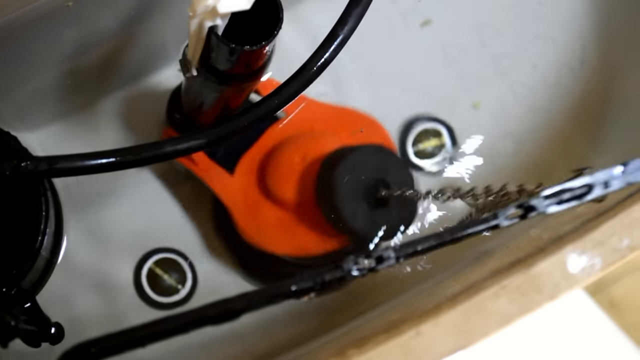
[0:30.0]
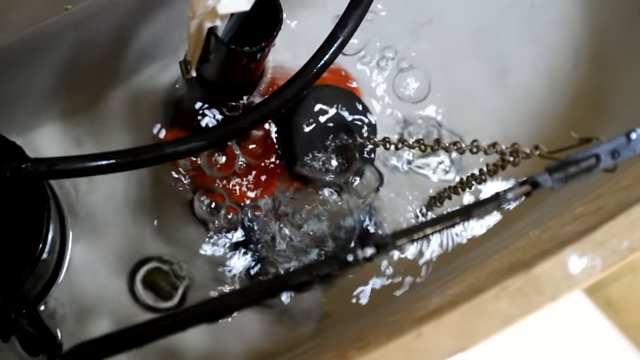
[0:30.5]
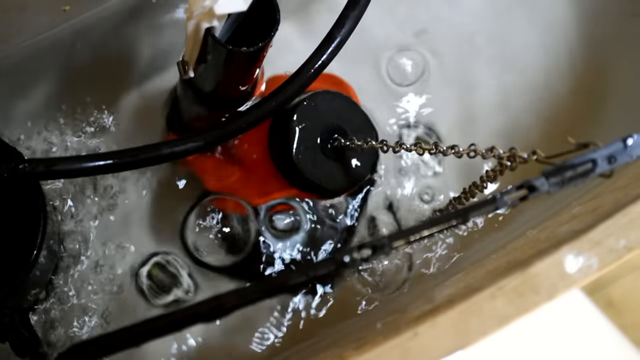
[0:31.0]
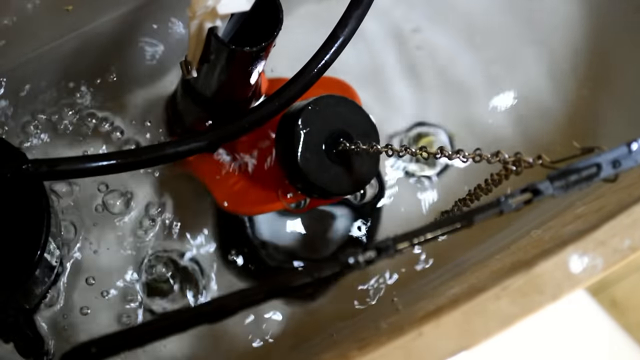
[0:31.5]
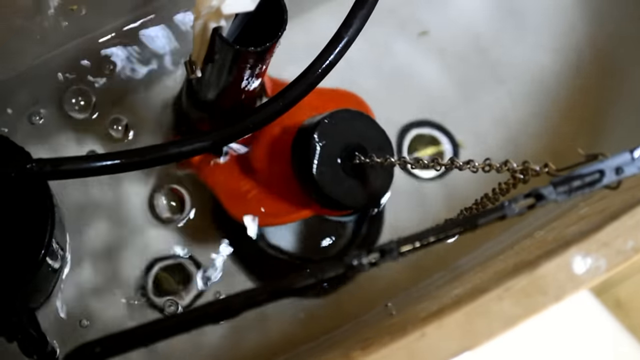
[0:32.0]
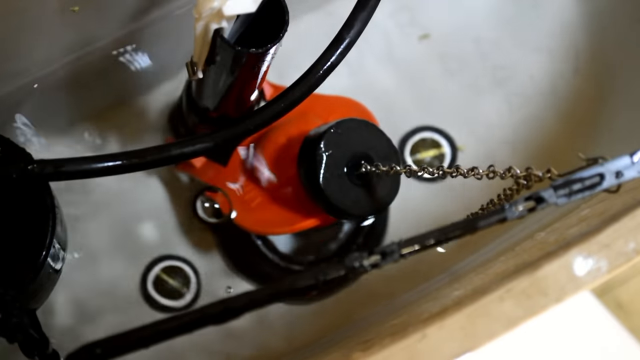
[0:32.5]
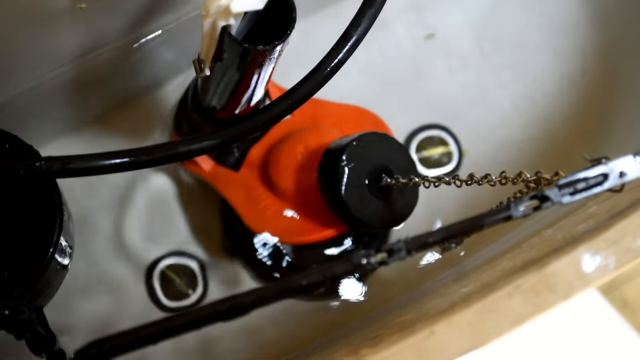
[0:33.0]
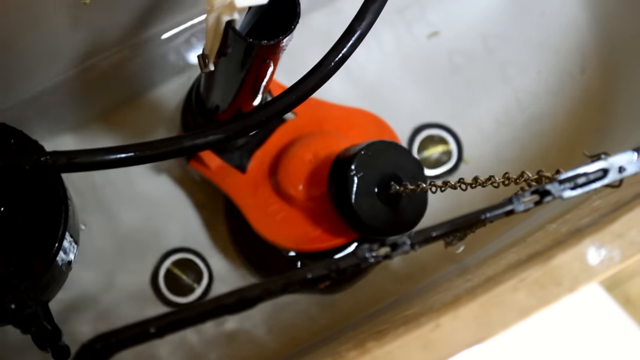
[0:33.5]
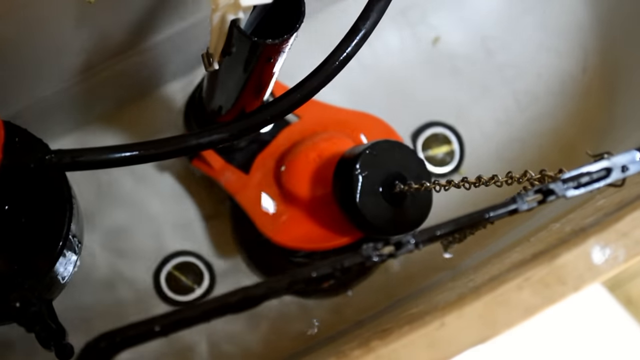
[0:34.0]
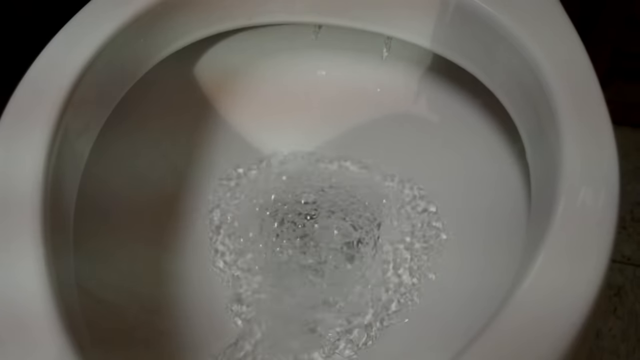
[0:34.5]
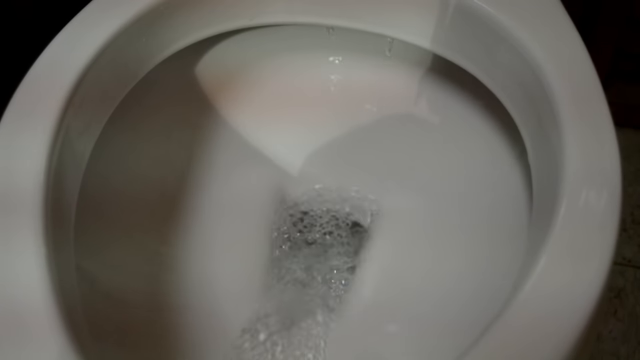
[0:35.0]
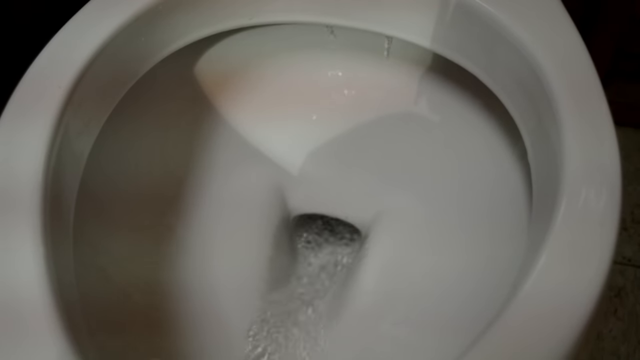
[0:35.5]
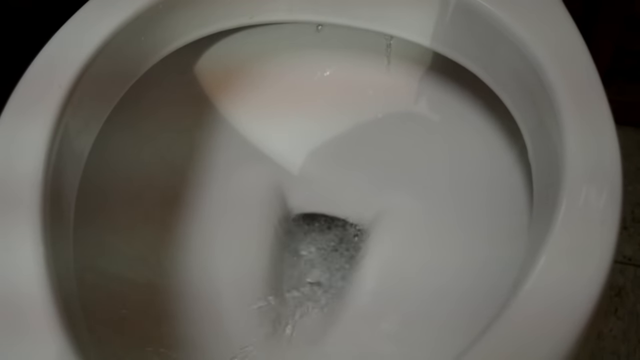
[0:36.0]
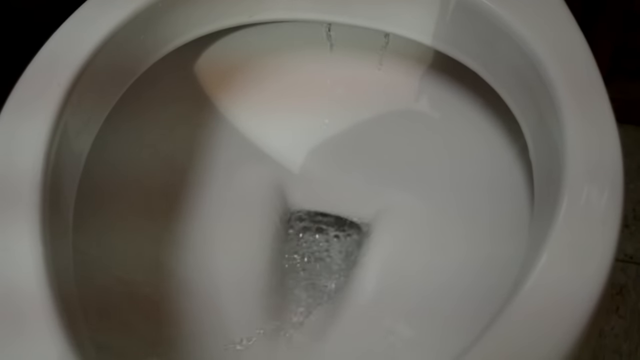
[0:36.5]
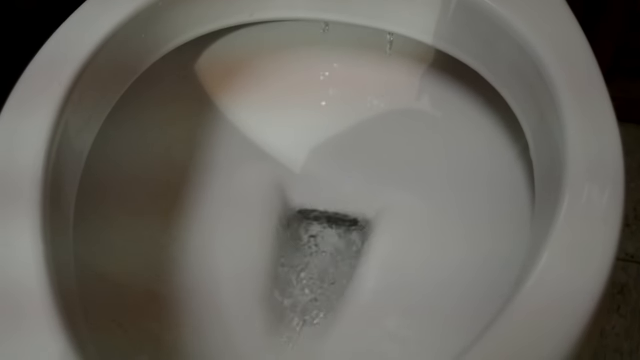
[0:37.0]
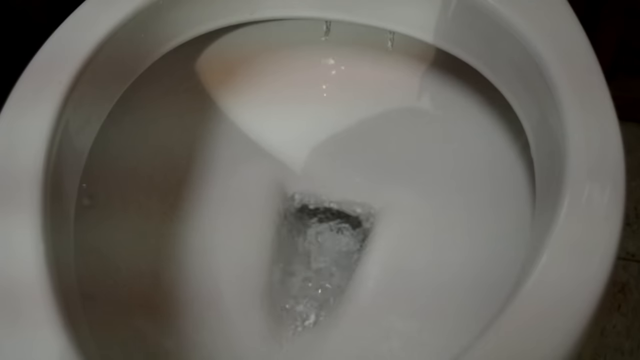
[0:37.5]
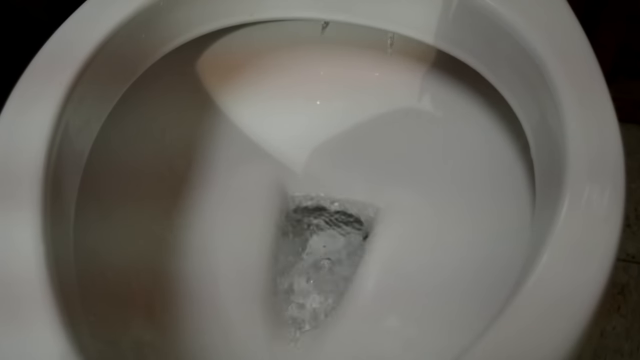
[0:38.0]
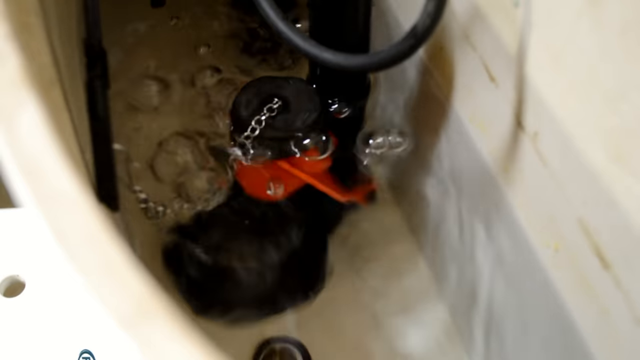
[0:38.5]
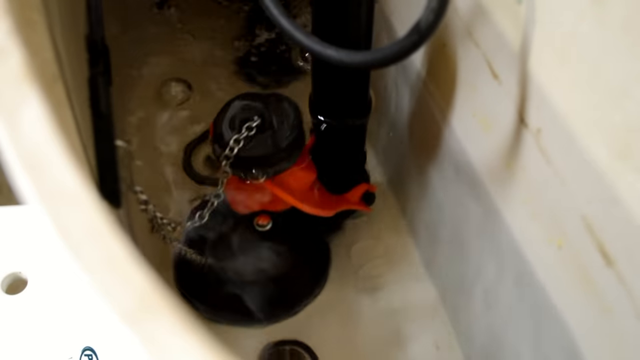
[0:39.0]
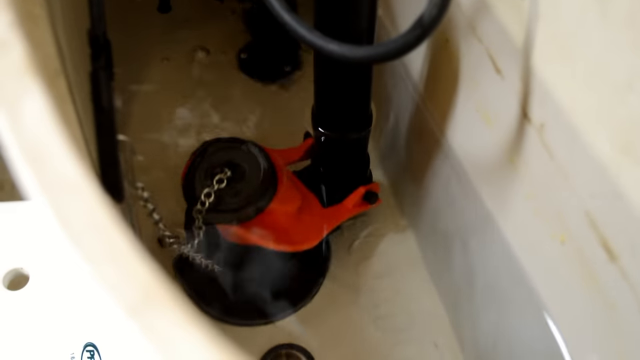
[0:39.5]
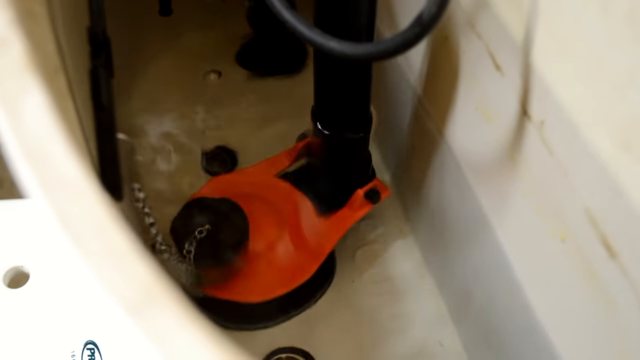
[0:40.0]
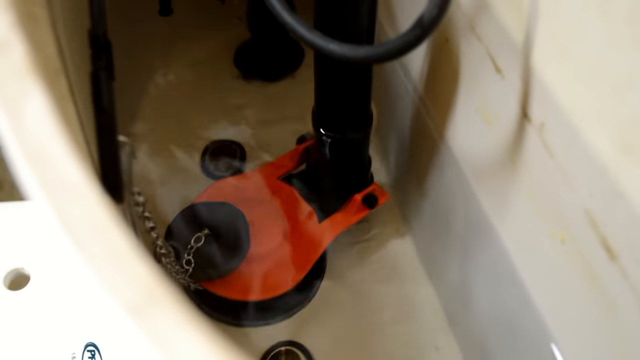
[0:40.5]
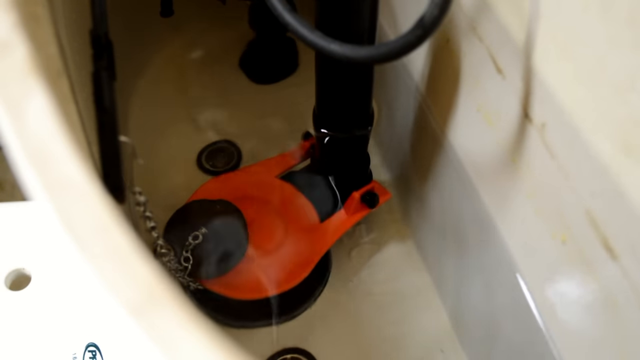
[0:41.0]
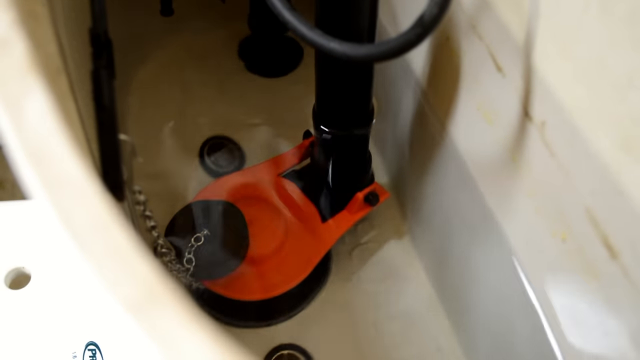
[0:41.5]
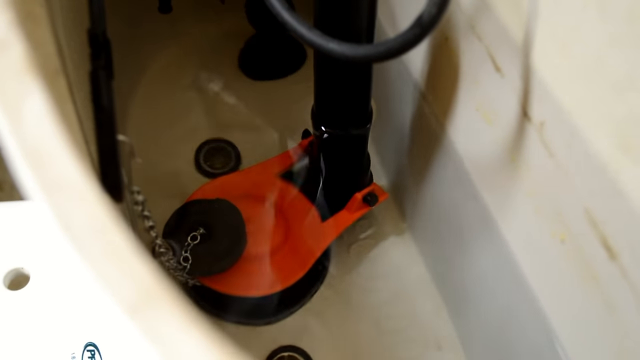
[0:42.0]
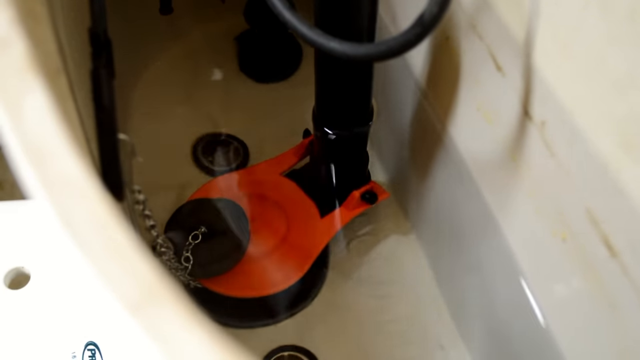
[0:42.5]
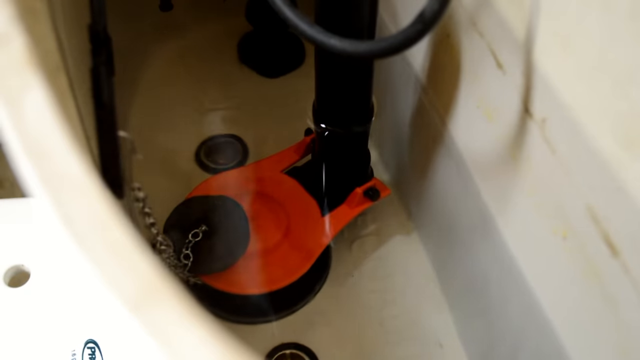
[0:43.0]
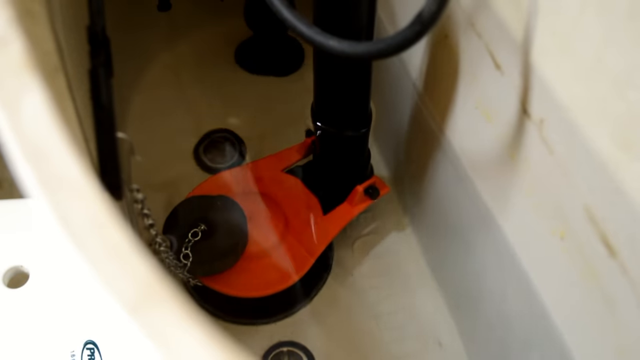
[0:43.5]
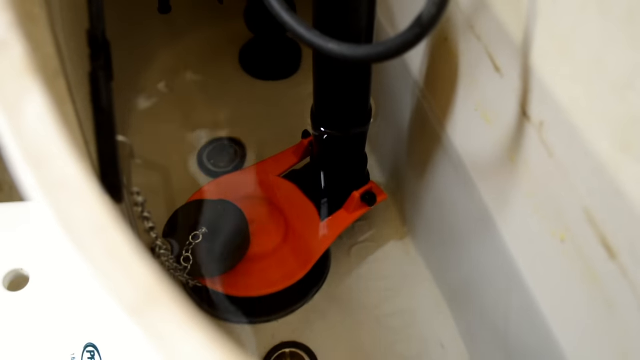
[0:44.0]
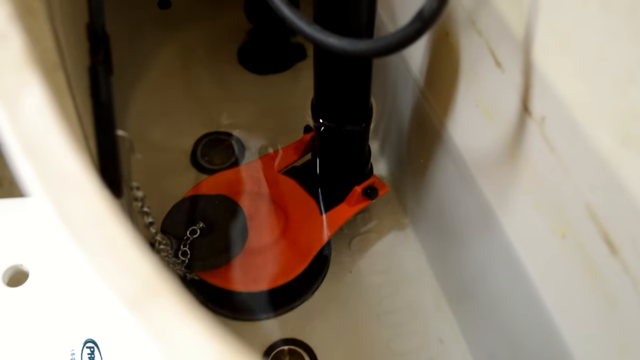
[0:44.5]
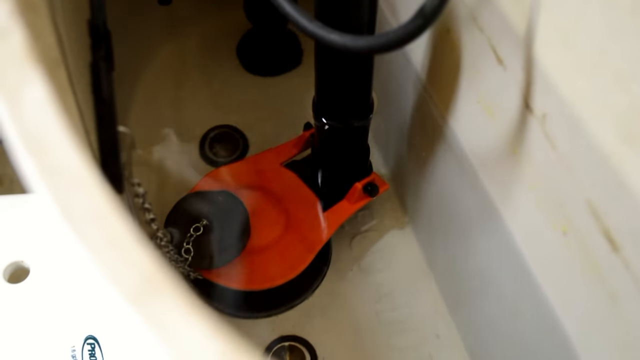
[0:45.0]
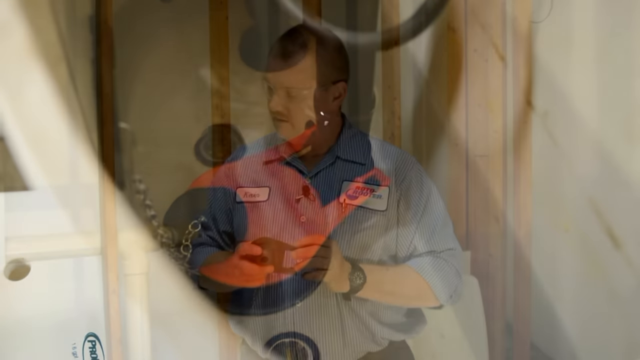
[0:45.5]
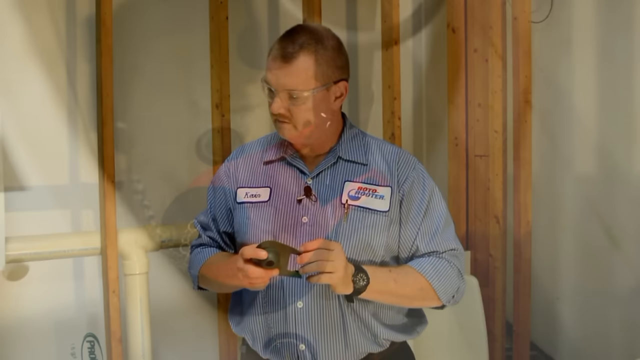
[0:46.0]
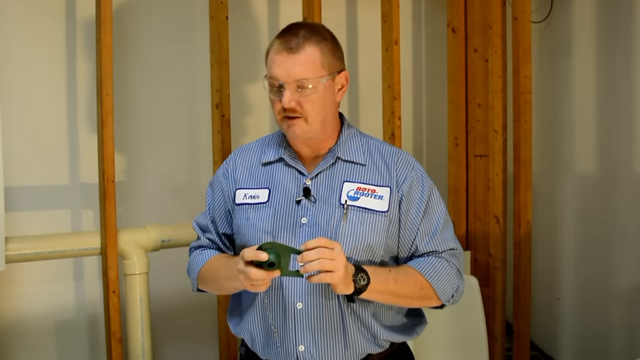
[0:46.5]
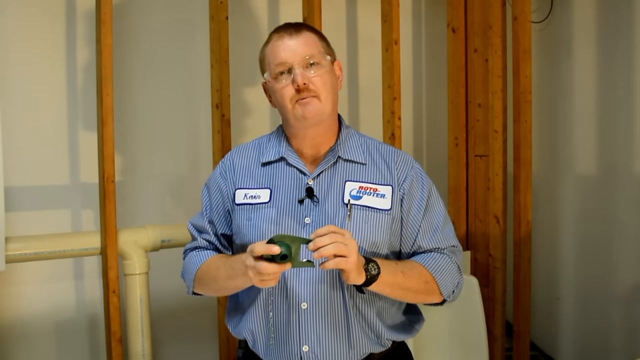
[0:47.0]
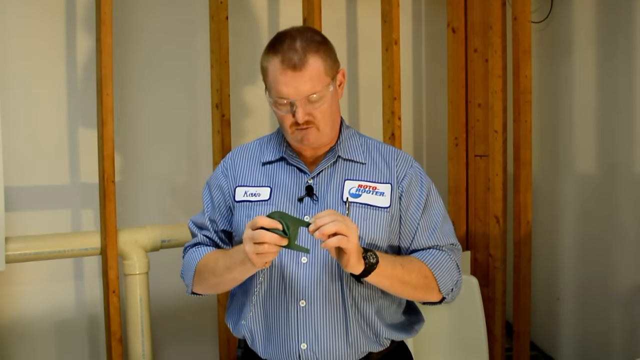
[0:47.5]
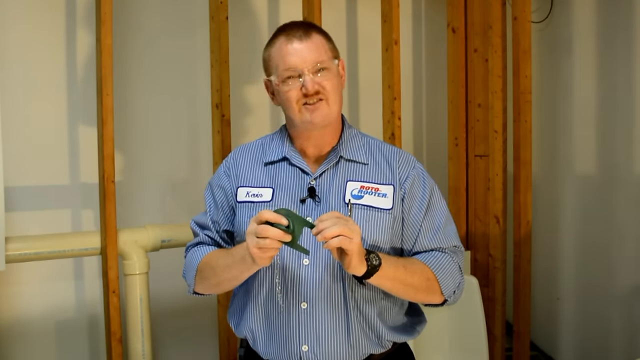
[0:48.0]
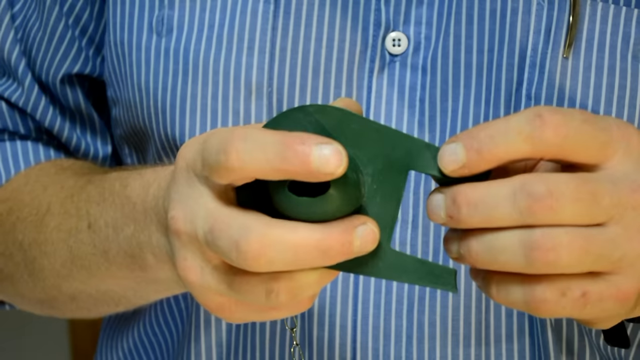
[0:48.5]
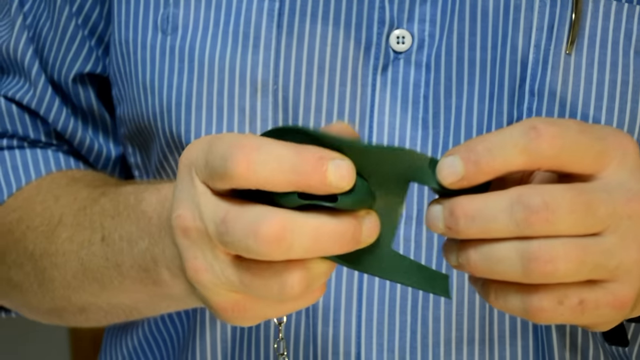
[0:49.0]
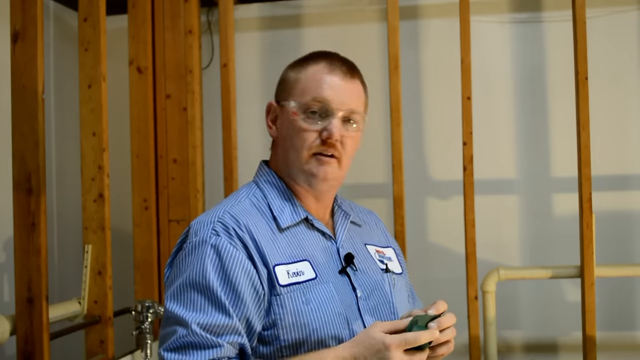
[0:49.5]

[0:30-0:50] The plumber flushes the toilet, and the water goes toward the inside of the toilet. He then checks that it closes properly. Later he shows an elastic material that might be used to make it seal properly. Inside the toilet the water level is visible, along with the mechanism used to pull the flush so the water goes down. The water level decreases and then comes right back up. The seal closes, so the water in the tank stays at the proper level without draining into the toilet. The plumber has a clock on his left arm. The company name is on his shirt, which is blue with white stripes, and his name is on the right side of the shirt.